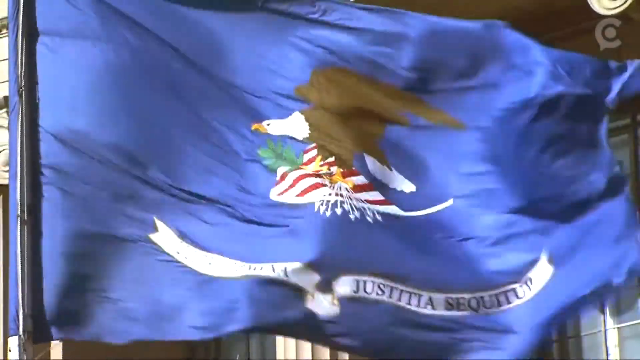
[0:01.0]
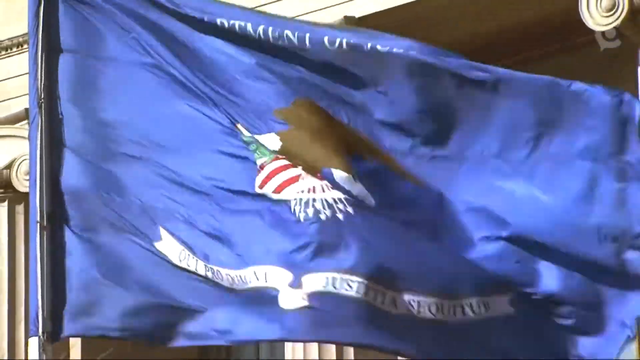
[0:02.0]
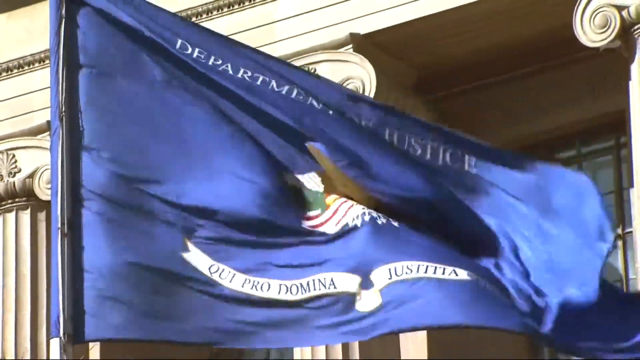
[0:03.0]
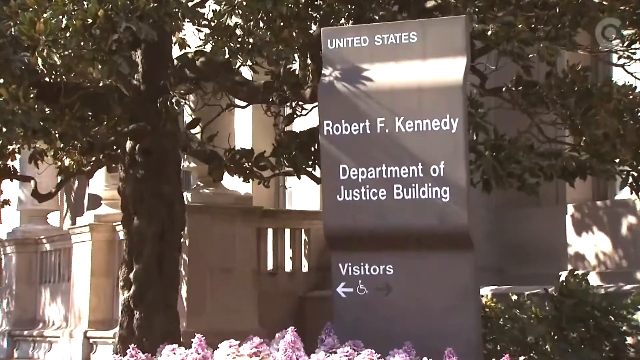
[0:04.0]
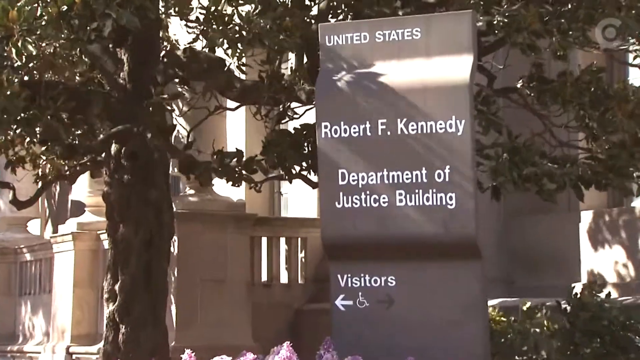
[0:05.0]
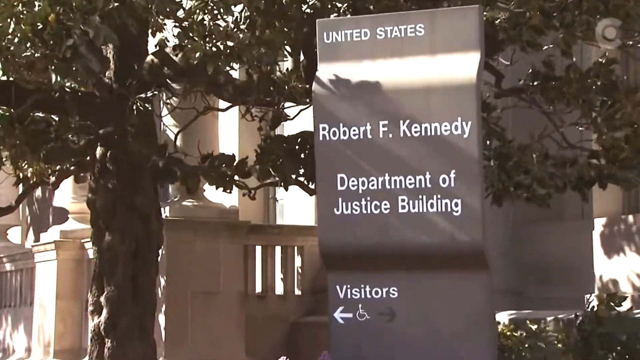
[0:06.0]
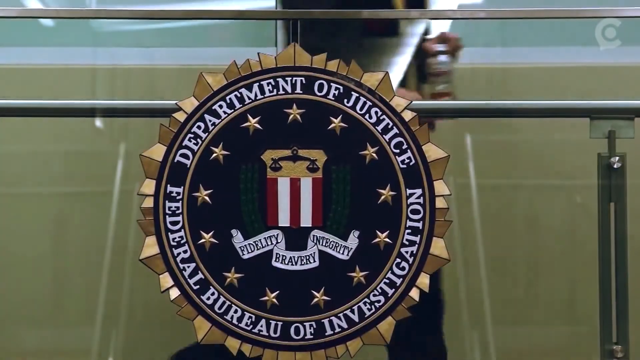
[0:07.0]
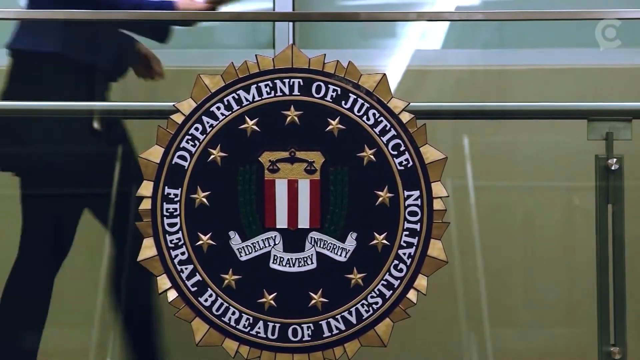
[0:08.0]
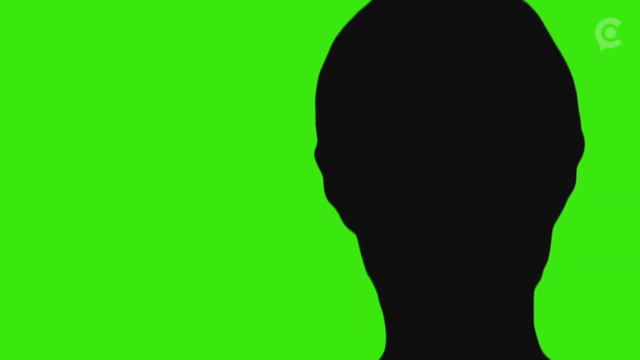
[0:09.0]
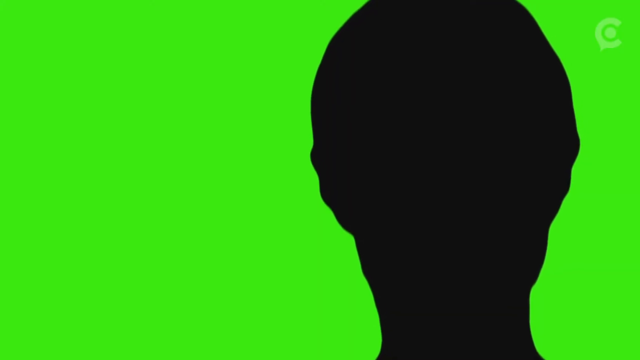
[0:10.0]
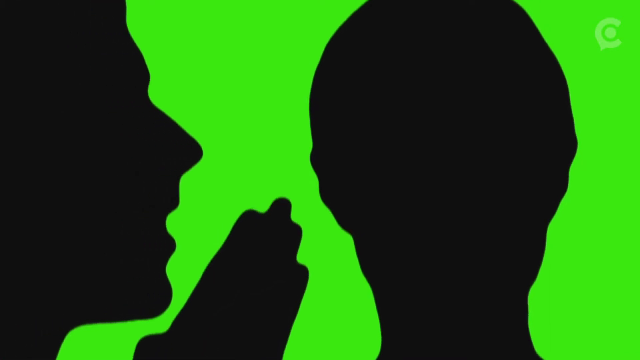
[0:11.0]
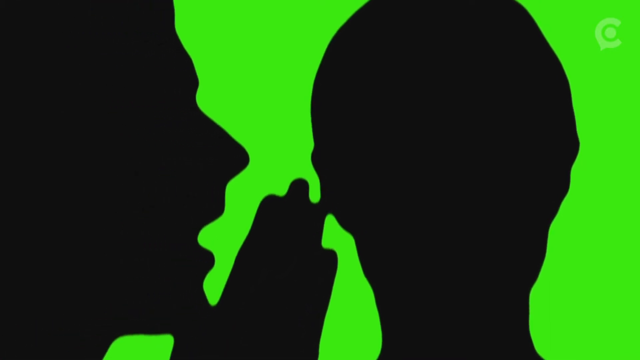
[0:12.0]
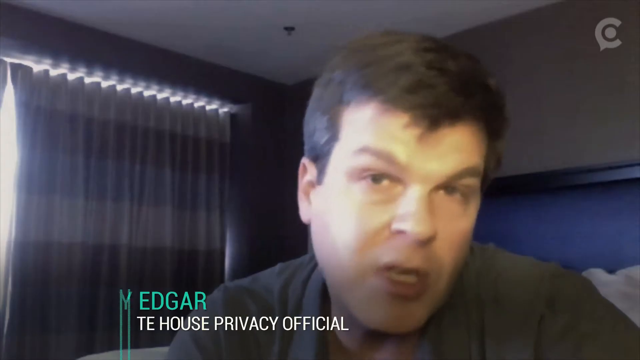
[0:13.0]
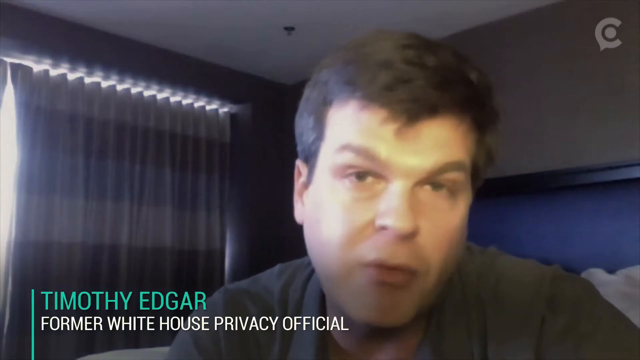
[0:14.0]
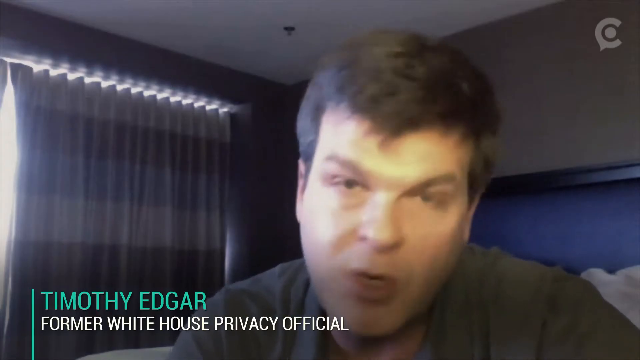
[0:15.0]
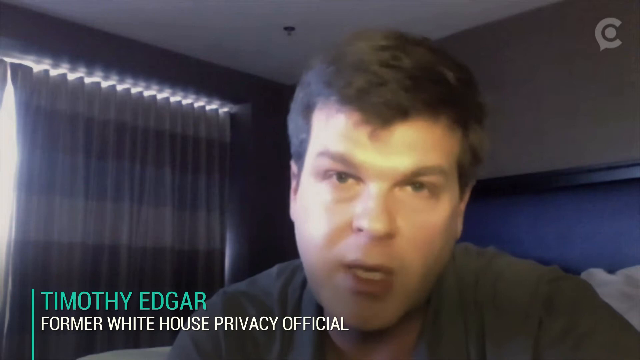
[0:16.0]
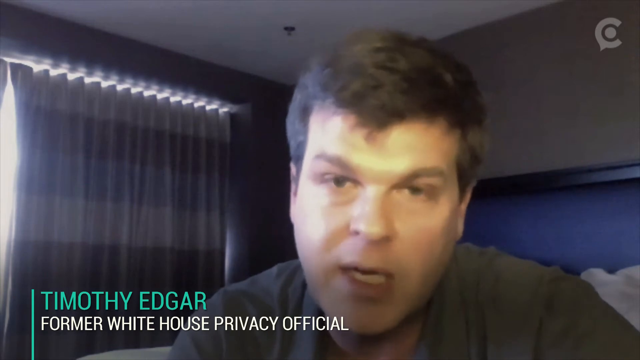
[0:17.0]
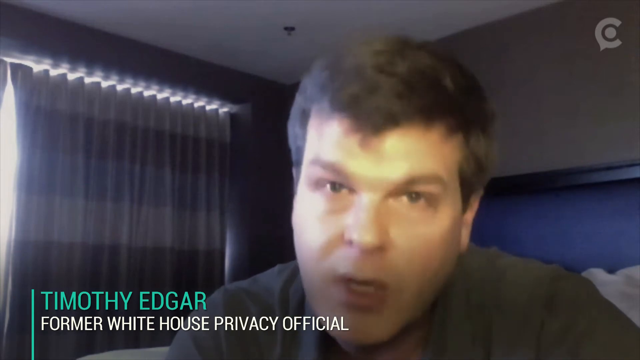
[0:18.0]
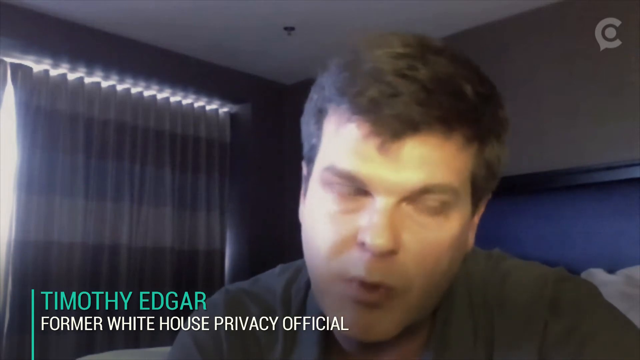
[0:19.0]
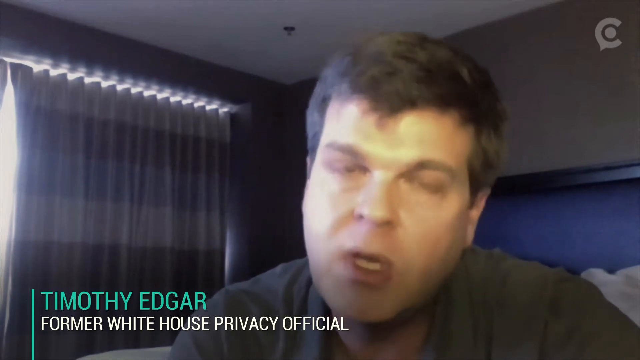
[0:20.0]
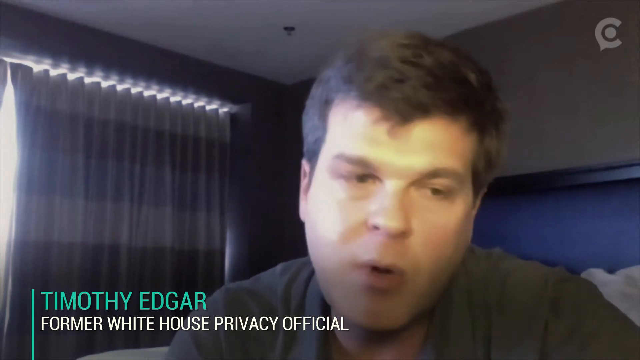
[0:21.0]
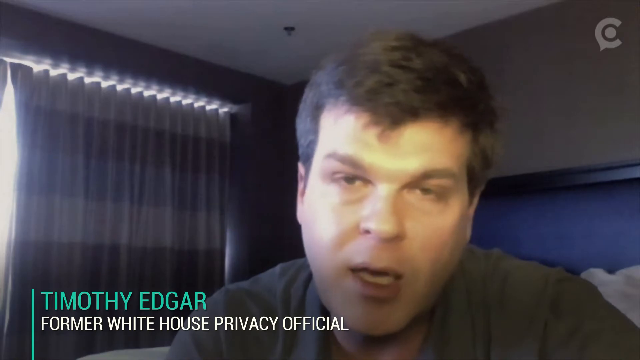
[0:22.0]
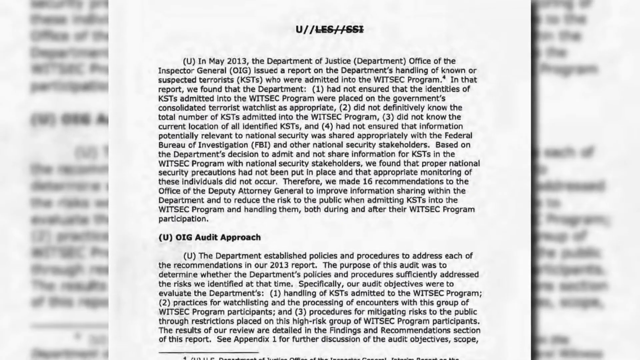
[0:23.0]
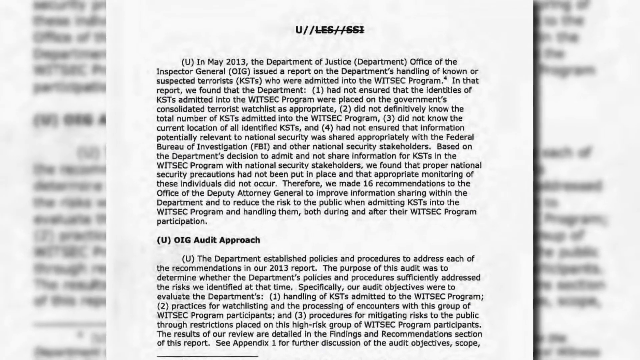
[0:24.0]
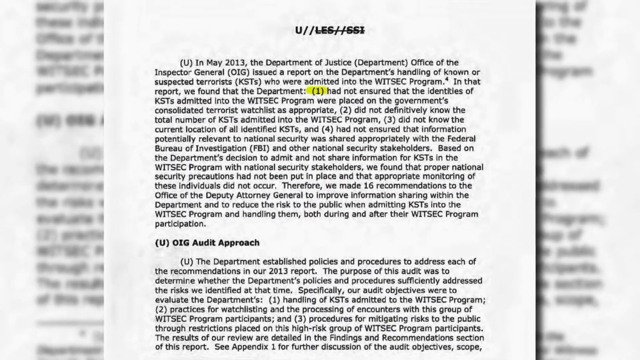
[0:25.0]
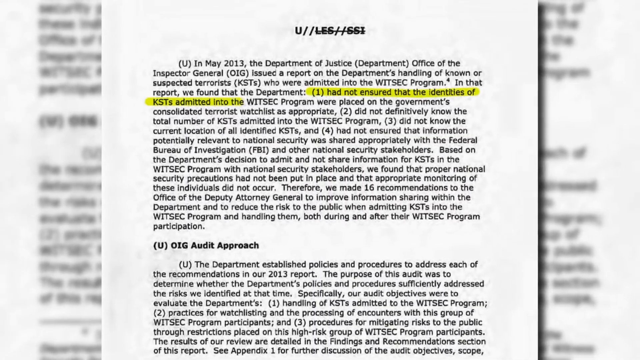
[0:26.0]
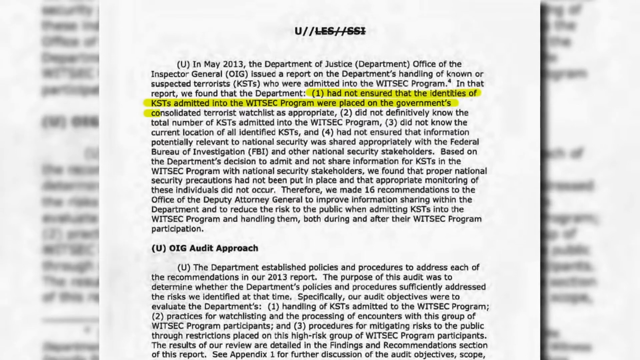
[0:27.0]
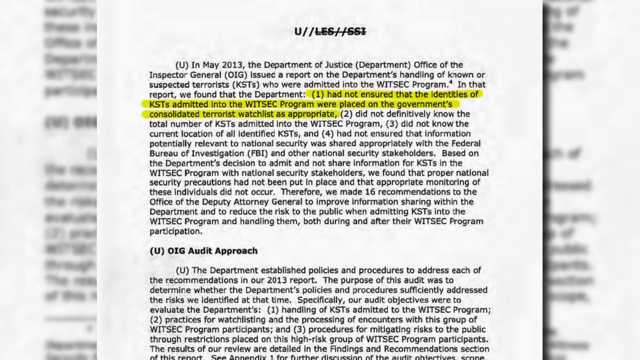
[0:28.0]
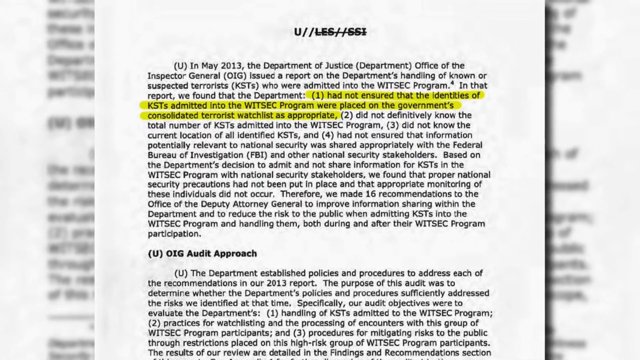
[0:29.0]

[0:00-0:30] A deep royal blue flag waves, showing an eagle, with "Department of Justice" written across the top in white. The flag waves in front of a building that has a sign beside it reading "United States, Robert F. Kennedy Department of Justice building." A "visitors" label with an arrow pointing to the left is also visible. There is a large tree on the left side, and a short concrete fence surrounds the building. The camera pans in closer to the sign, and the leaves and branches of the tree wave gently in the breeze. Next, the seal of the Department of Justice, Federal Bureau of Investigation appears on a glass railing as people walk past it. A silhouette of a person's head appears, and another silhouette, seen from the side, leans toward the first person's ear and begins to whisper. A man is then interviewed, seen in profile with only his head visible; the name "Timothy Edgar" is written in blue text in the lower left of the screen. He keeps speaking, nodding his head and blinking rapidly. A sheet of white paper with black text follows, and the camera pans in as some of the sentences are highlighted in yellow.